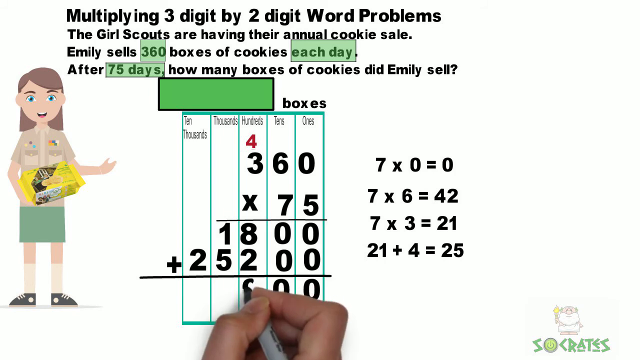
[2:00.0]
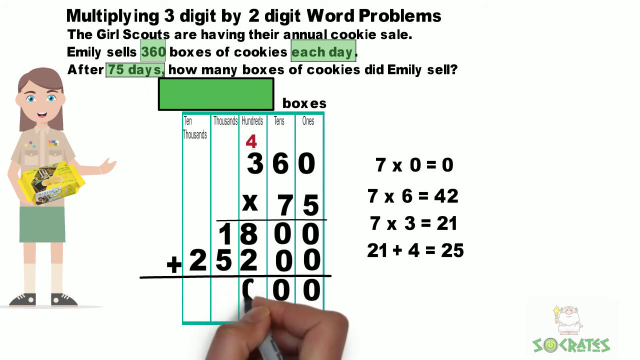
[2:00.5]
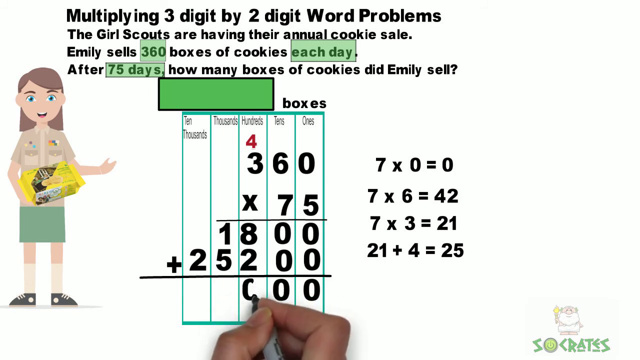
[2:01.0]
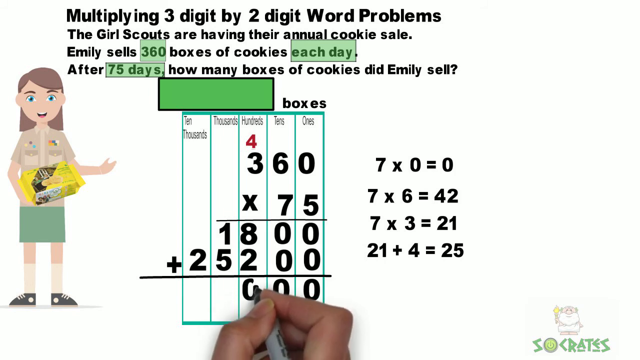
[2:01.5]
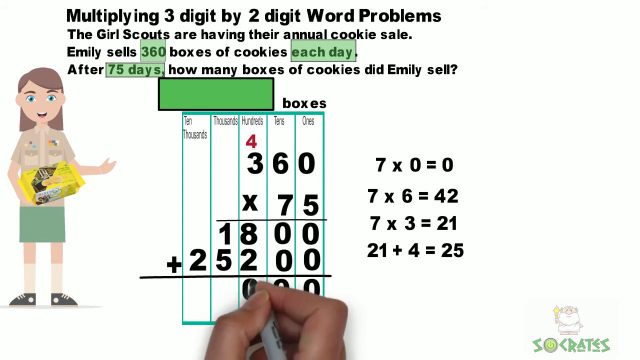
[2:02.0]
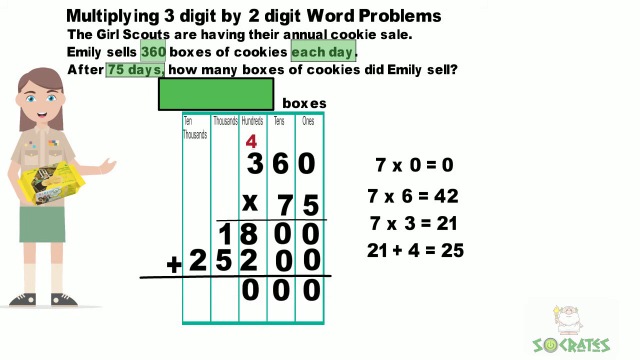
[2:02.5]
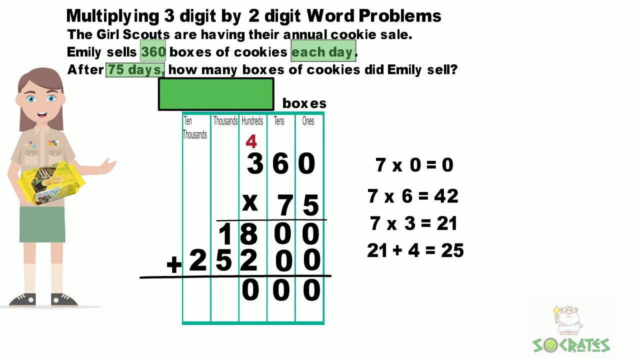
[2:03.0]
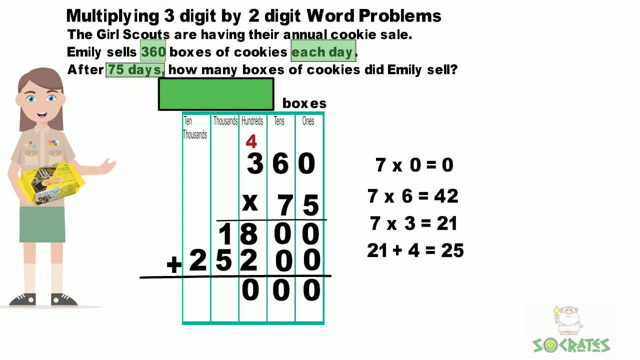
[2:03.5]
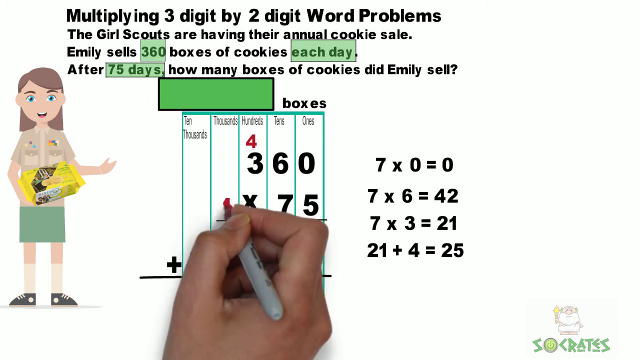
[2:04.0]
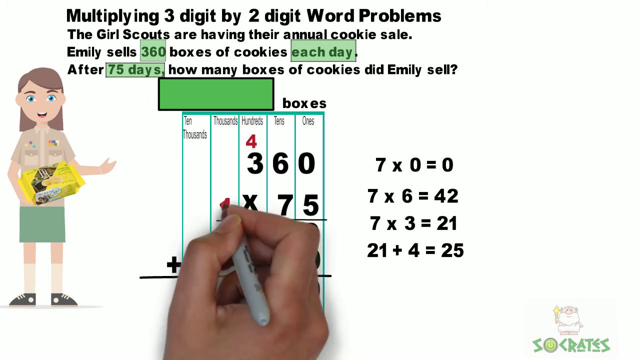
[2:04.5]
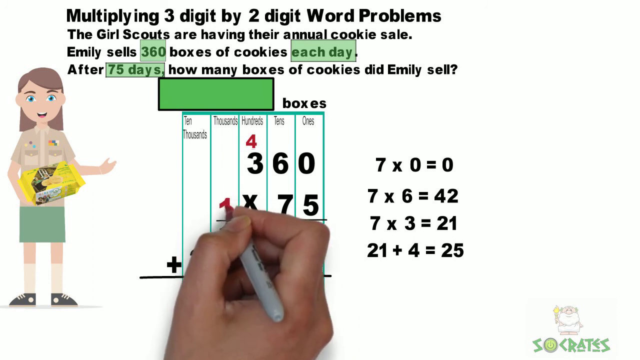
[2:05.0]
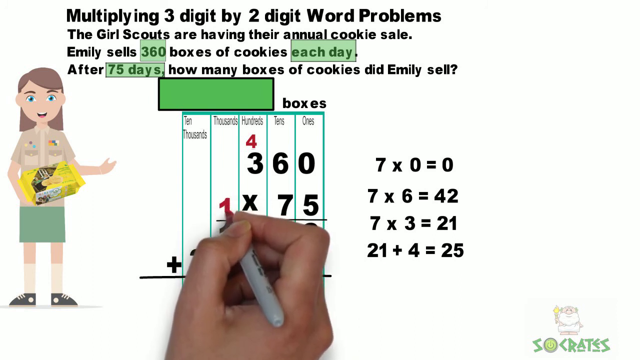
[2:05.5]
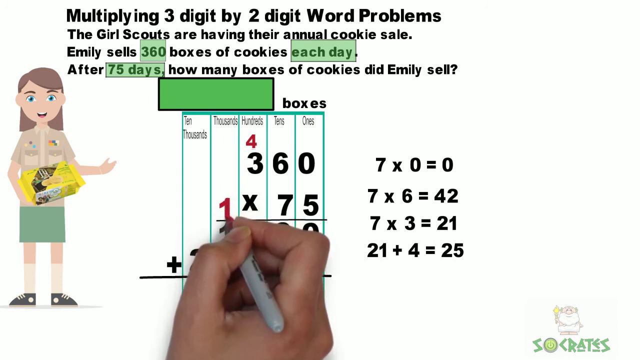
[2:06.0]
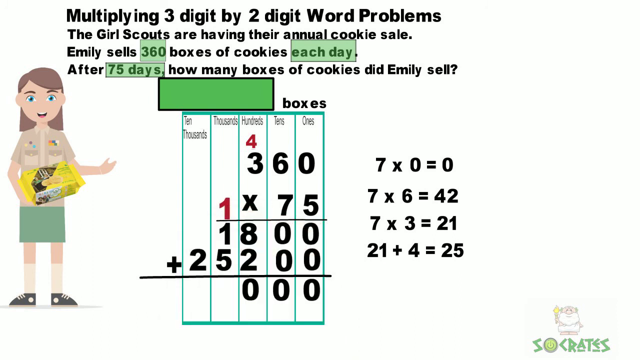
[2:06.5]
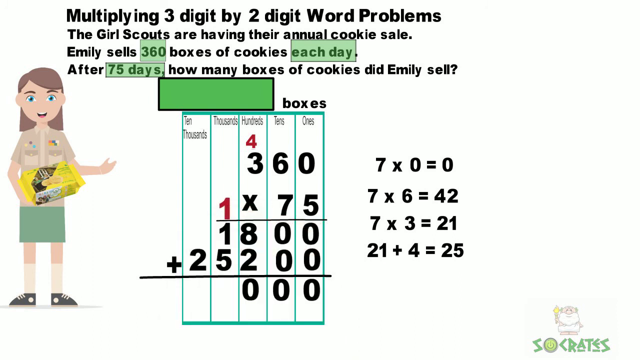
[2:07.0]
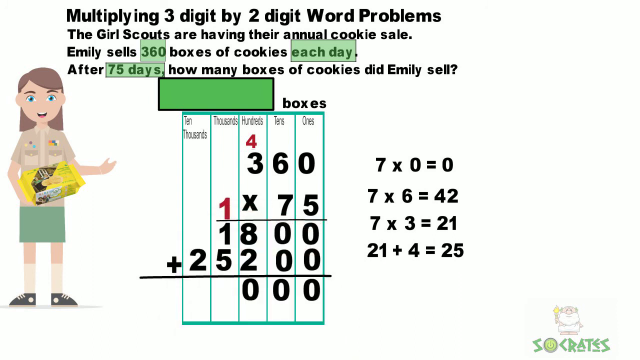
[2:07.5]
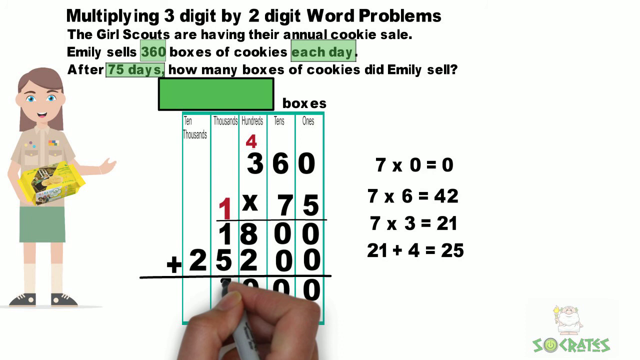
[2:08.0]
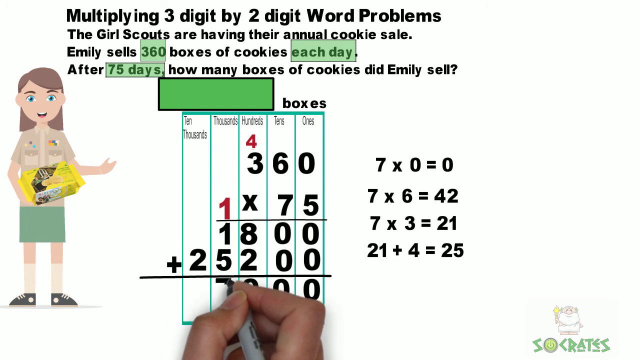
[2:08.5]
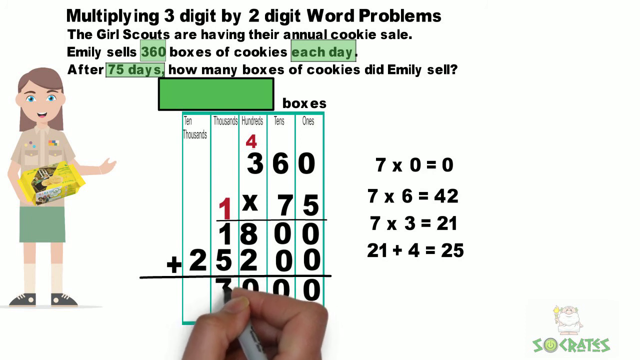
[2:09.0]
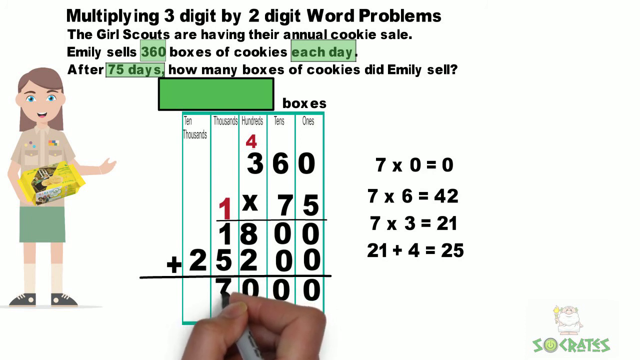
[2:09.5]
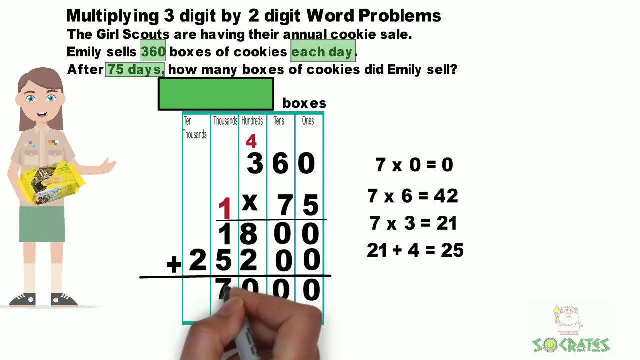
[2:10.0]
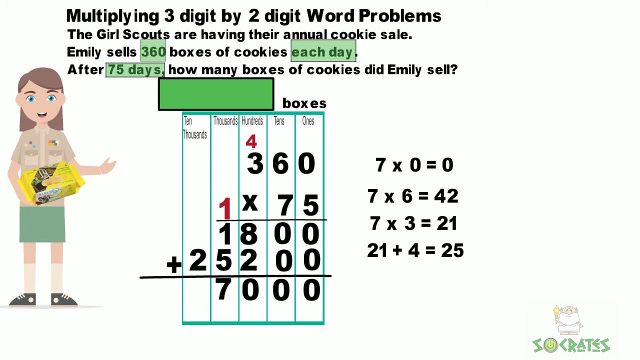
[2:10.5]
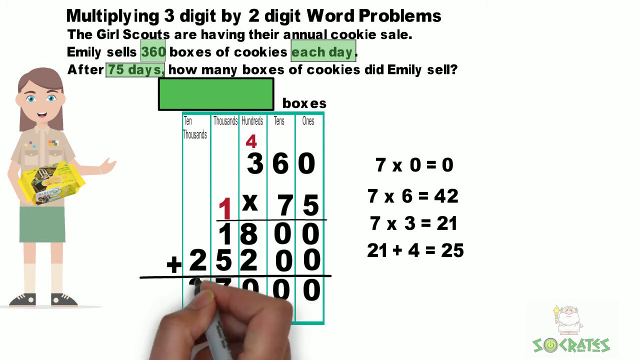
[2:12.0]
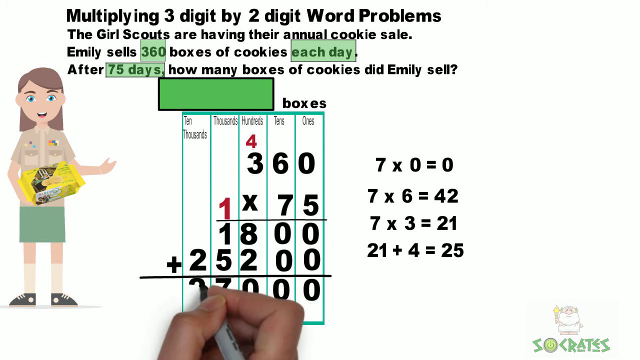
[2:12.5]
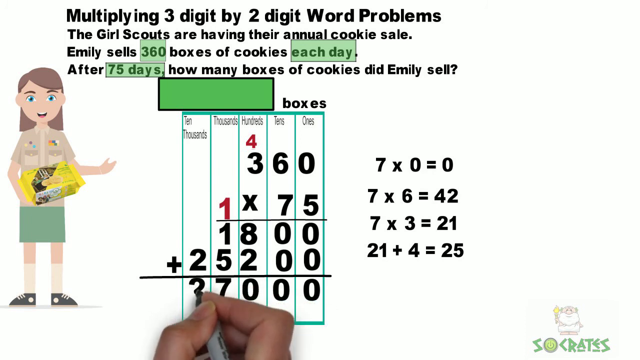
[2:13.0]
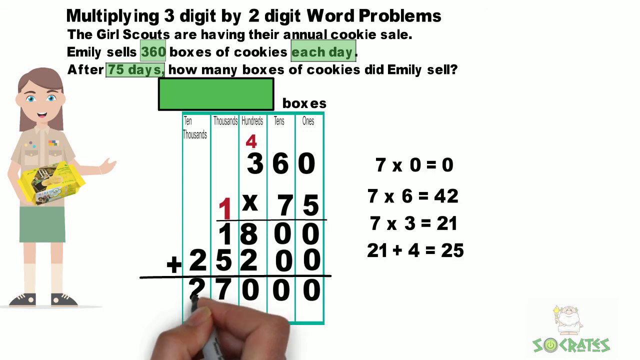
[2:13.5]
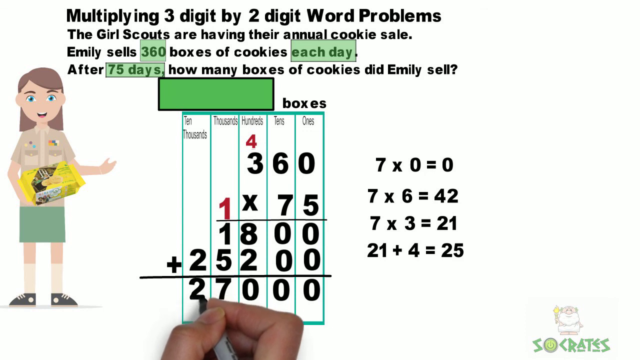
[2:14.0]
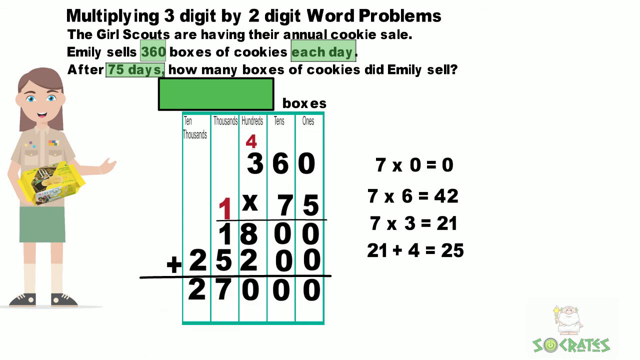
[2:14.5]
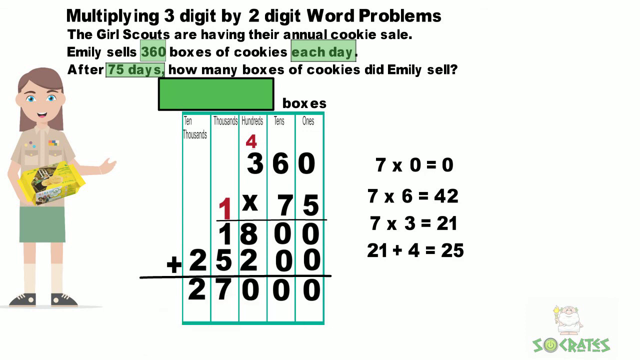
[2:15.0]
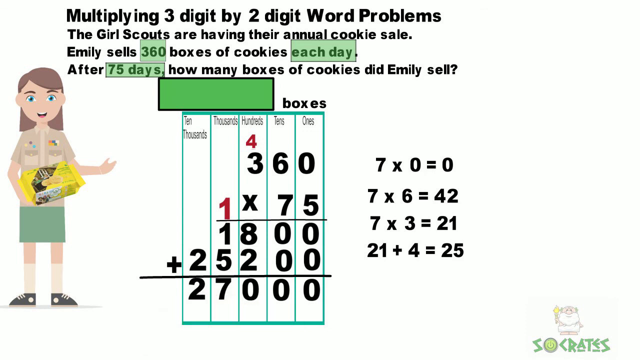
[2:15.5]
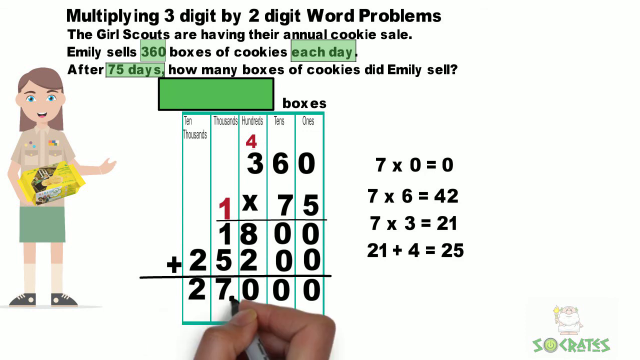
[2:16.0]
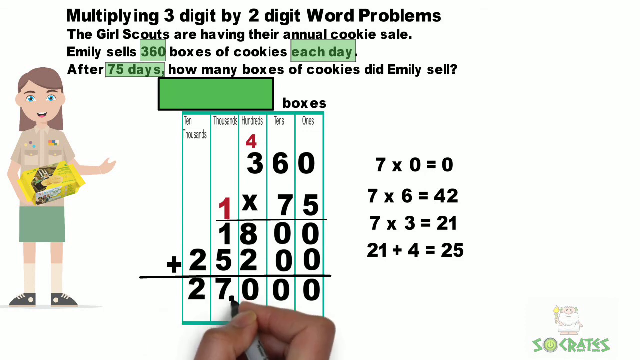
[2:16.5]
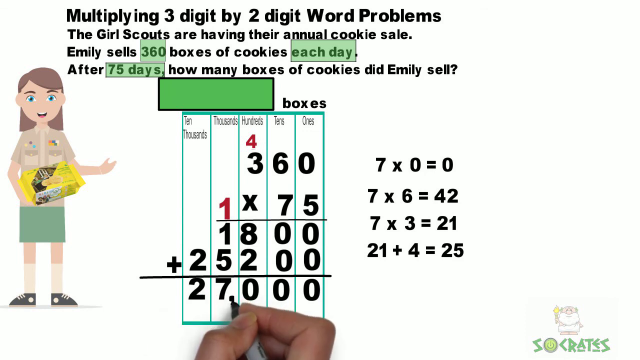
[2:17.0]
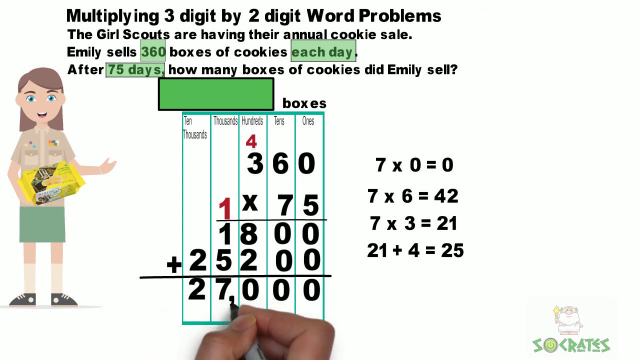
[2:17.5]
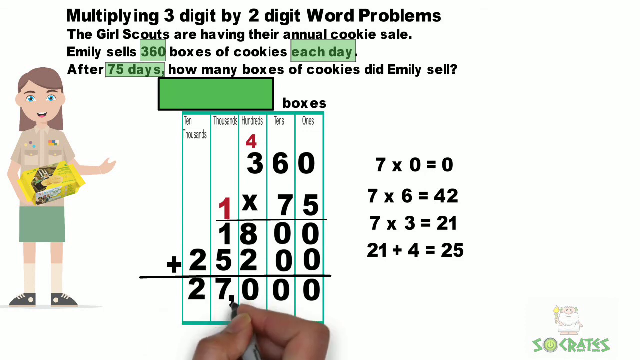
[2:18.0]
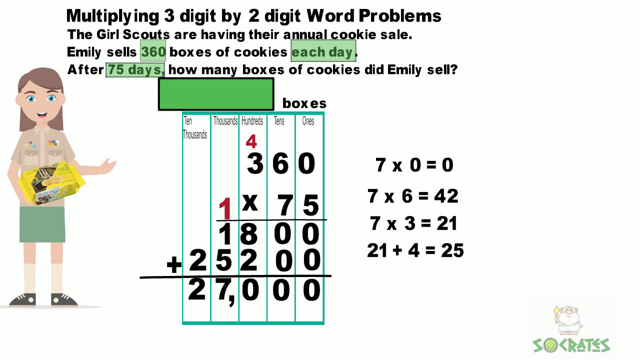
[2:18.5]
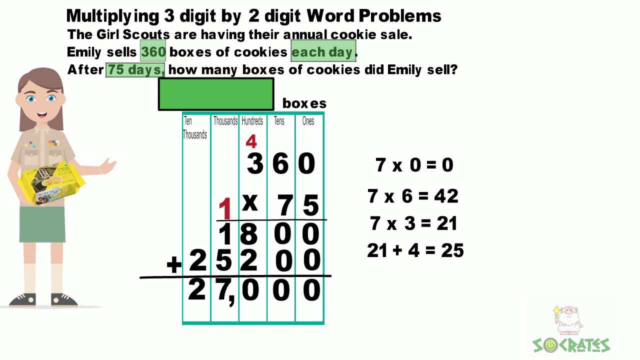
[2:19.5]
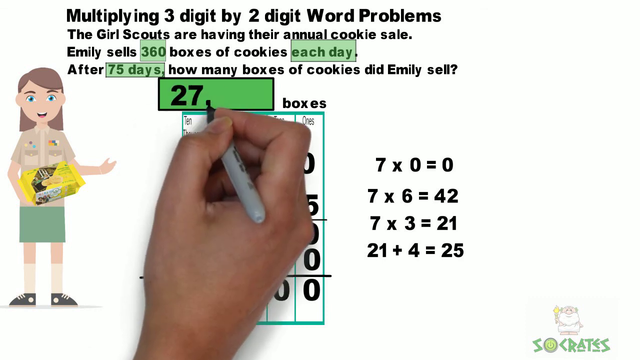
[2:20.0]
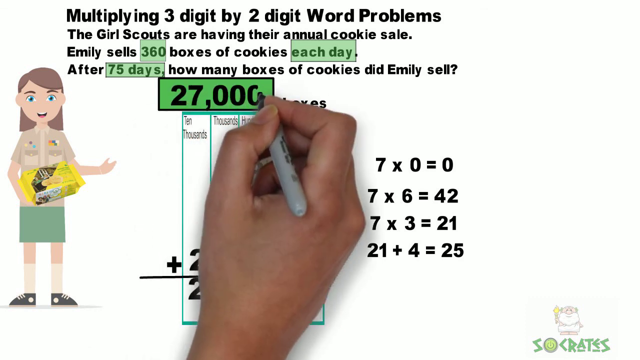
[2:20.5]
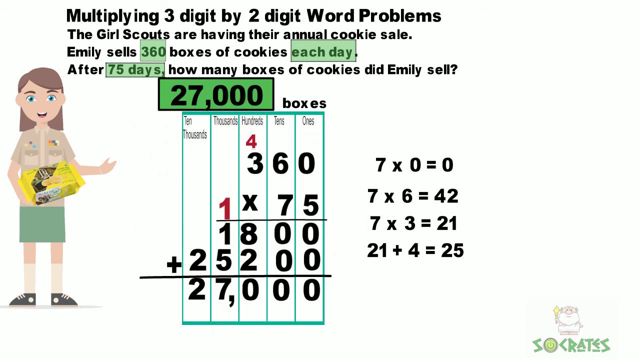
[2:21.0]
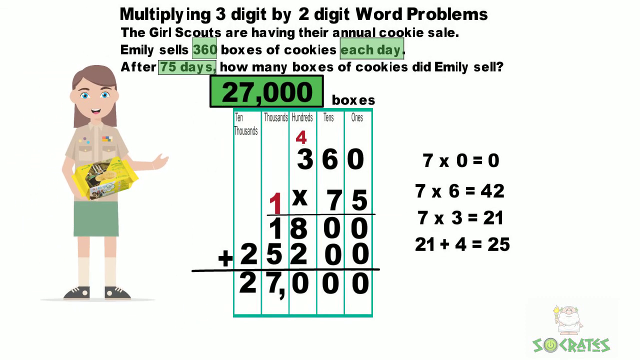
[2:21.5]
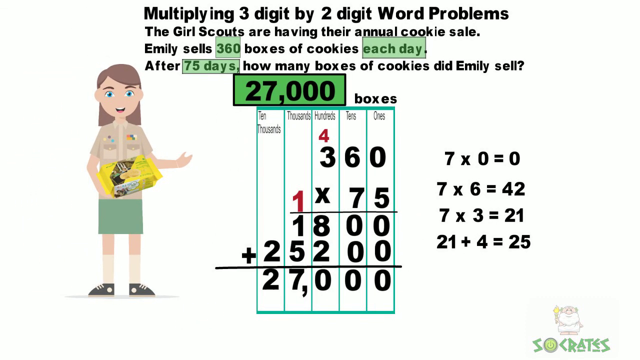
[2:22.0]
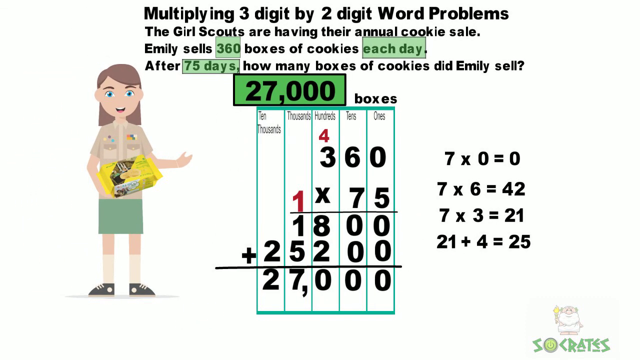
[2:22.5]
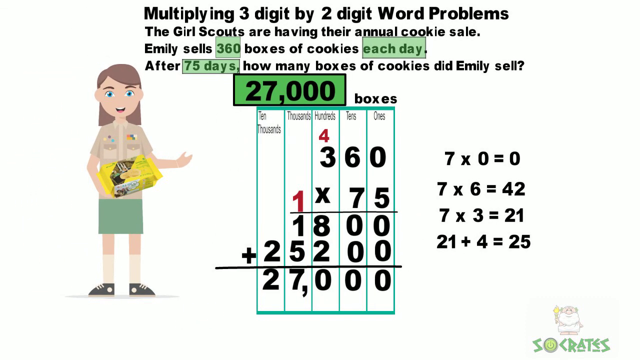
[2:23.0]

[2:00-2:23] A word problem is on a white slide. At the top of the screen, in black, is "multiplying three digit by two digit word problems", with the word problem written beneath it. To the left is a cartoon or digital image of a Girl Scout who looks to be holding a yellow box of cookies in her hands. Beneath the word problem is an empty green box with a black outline and the word "boxes" next to it. Beneath that is a five-column table with a teal outline. Inside the table are 360 times 75, an underline, then 1800 plus 25200, another underline, and 27,000 at the bottom of the table where the math problem was just worked. Then 27,000 is written in bold black font inside the green rectangle underneath the word problem, giving 27,000 boxes.